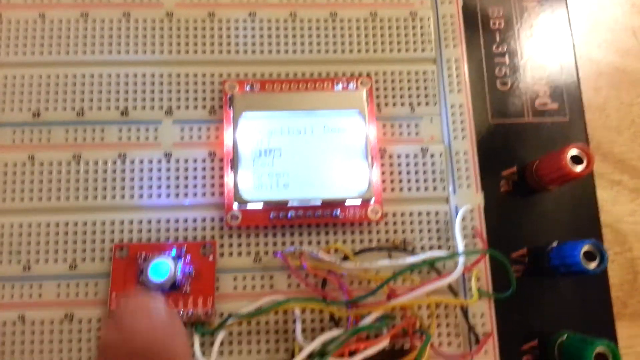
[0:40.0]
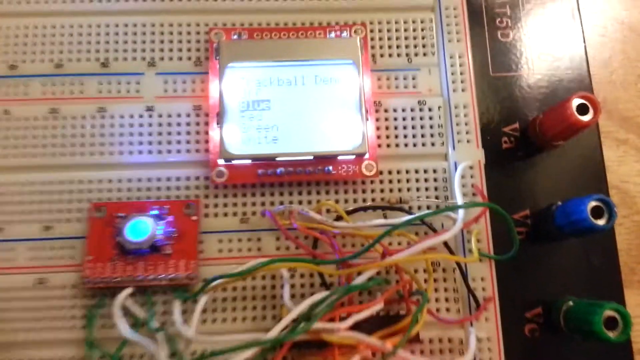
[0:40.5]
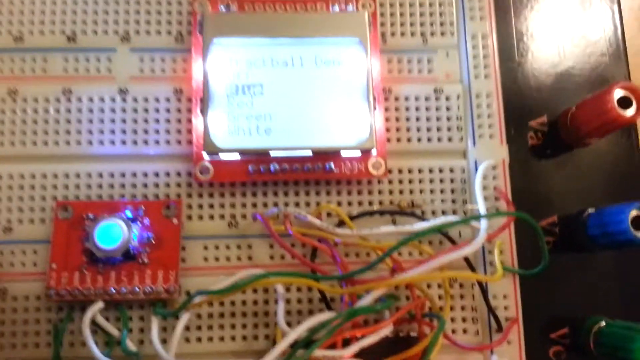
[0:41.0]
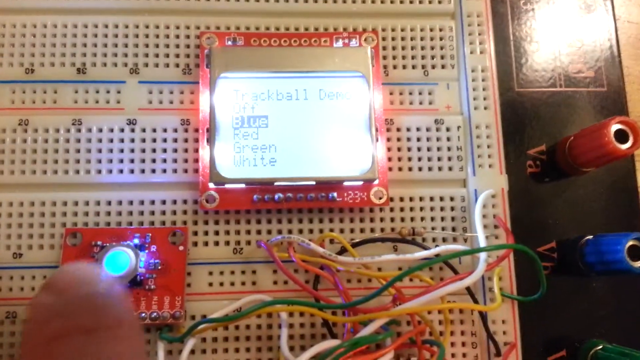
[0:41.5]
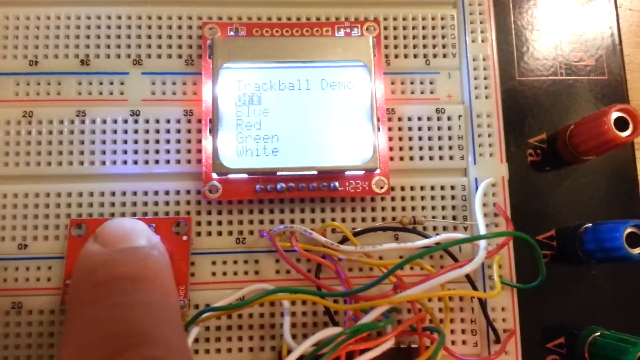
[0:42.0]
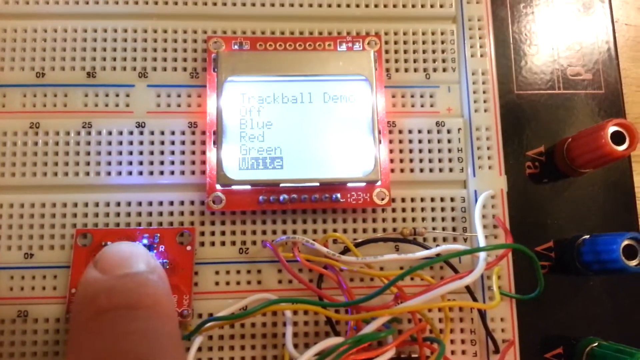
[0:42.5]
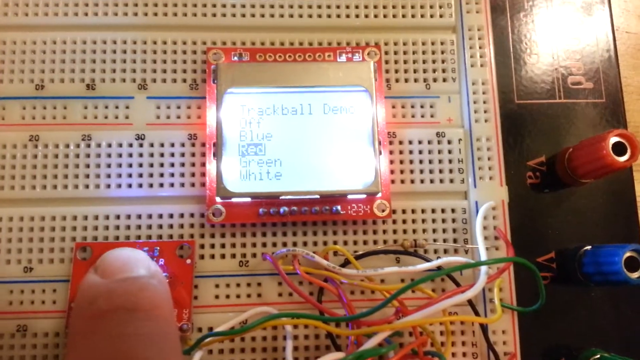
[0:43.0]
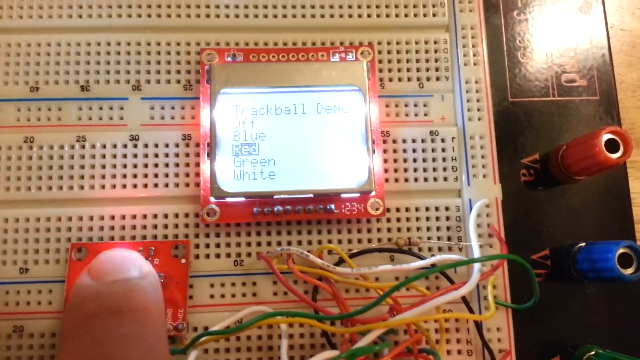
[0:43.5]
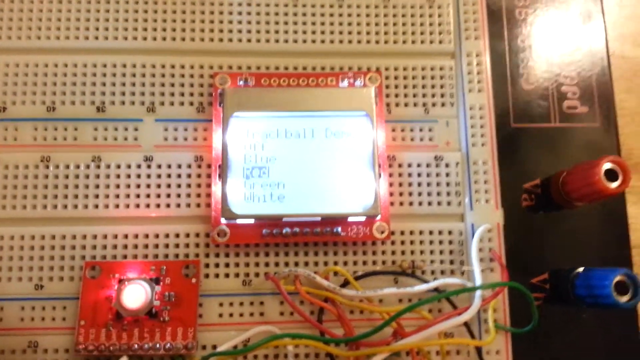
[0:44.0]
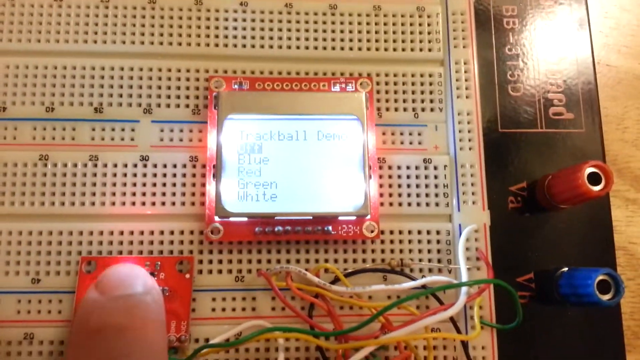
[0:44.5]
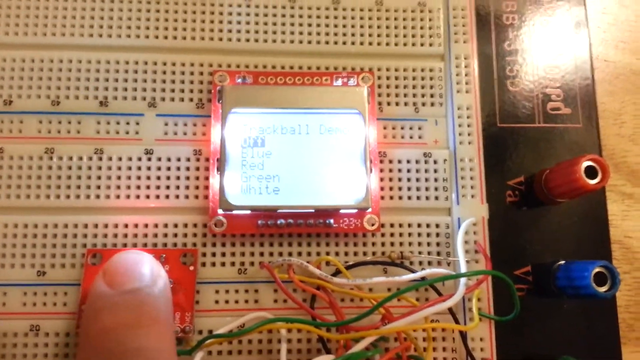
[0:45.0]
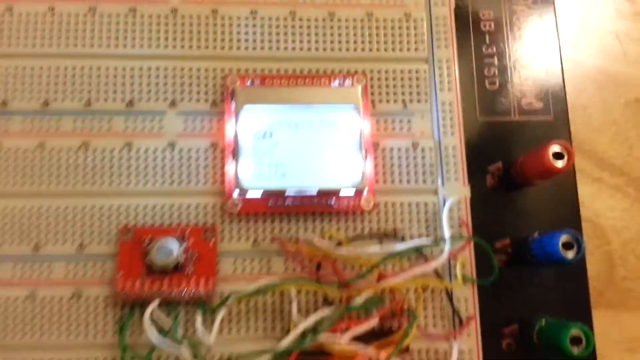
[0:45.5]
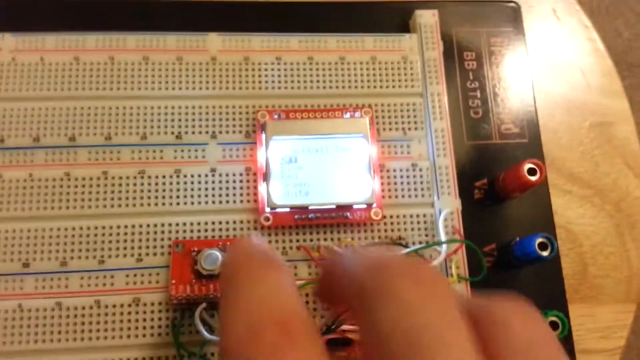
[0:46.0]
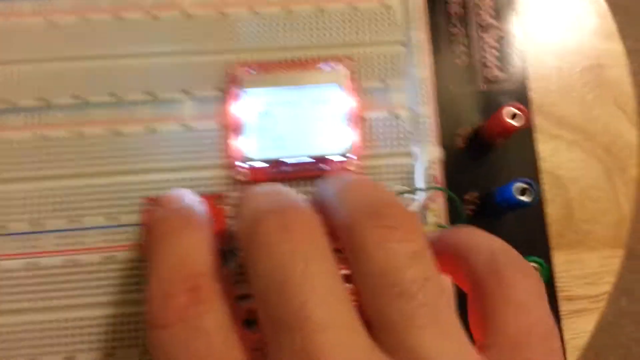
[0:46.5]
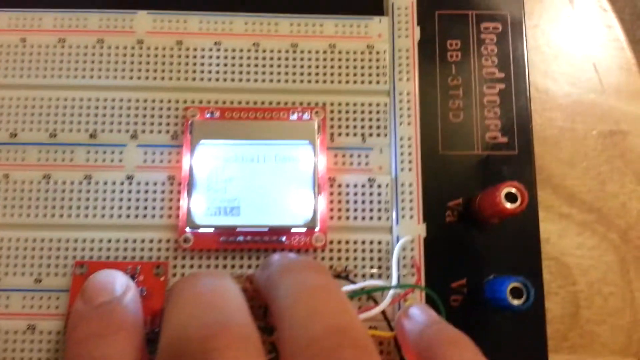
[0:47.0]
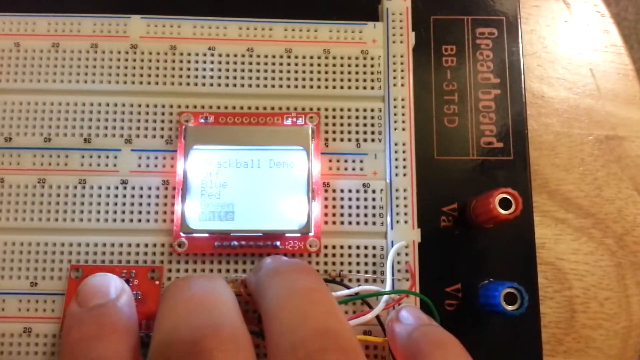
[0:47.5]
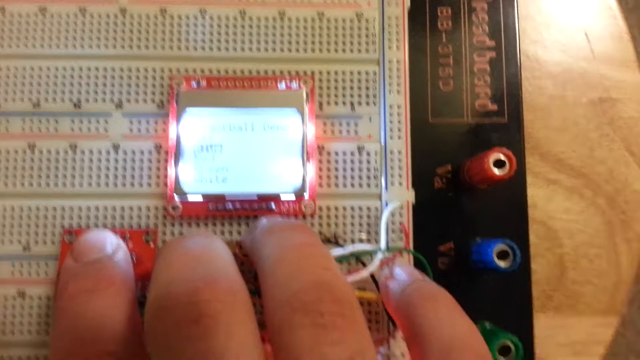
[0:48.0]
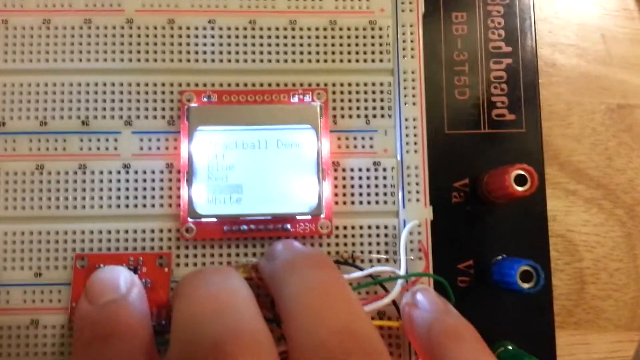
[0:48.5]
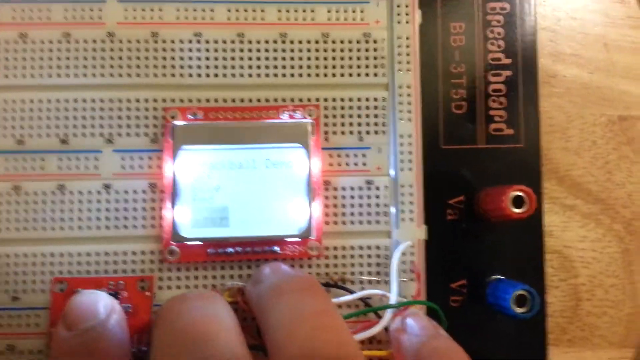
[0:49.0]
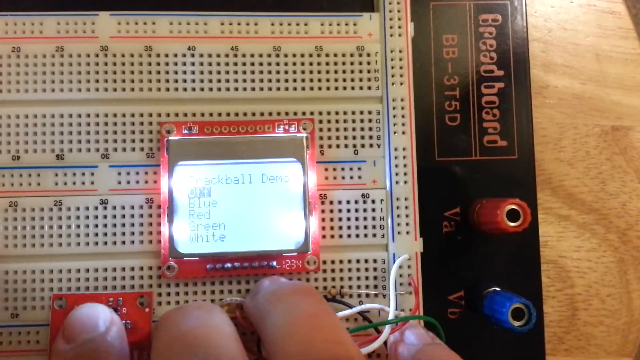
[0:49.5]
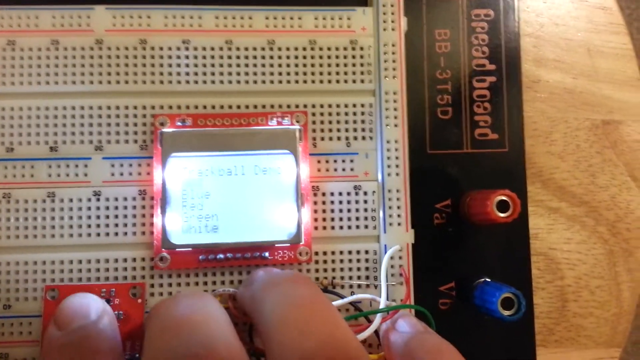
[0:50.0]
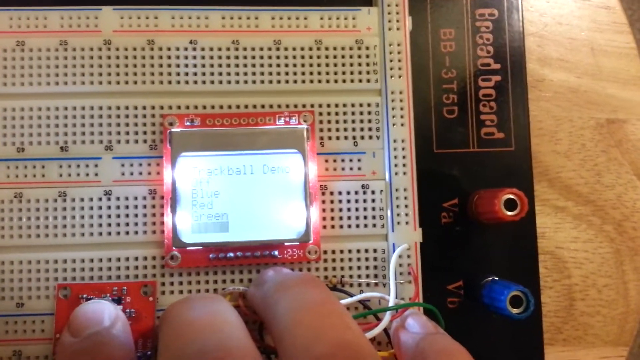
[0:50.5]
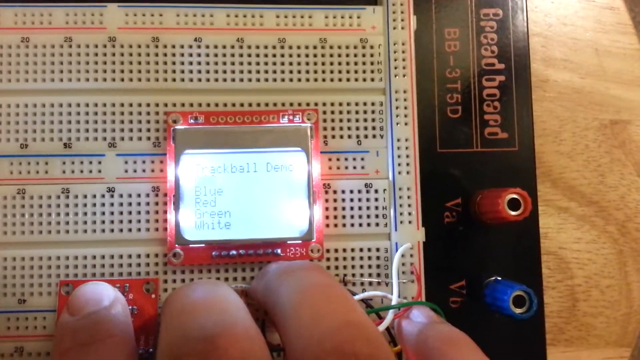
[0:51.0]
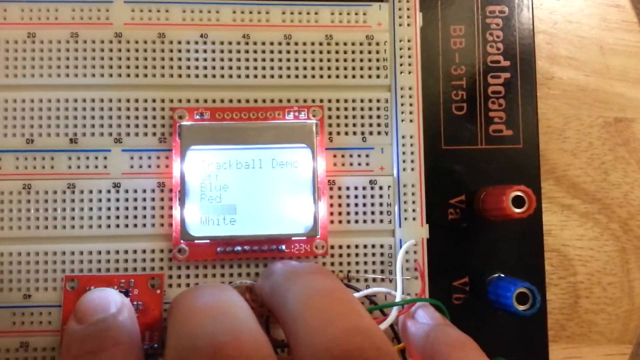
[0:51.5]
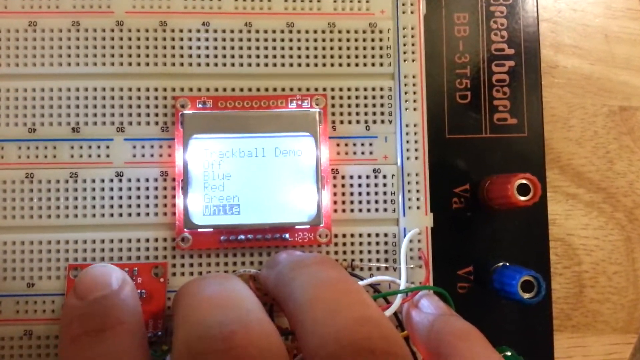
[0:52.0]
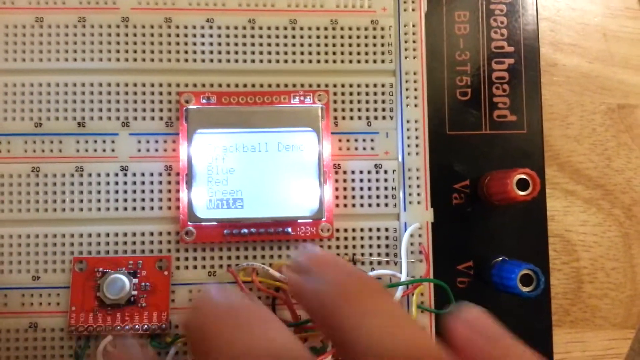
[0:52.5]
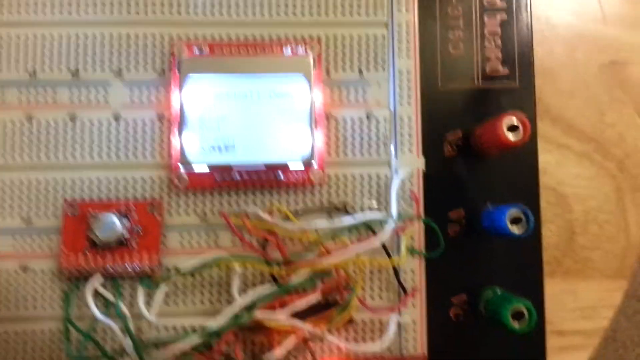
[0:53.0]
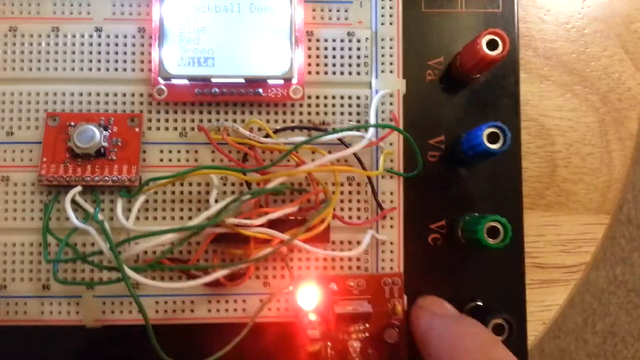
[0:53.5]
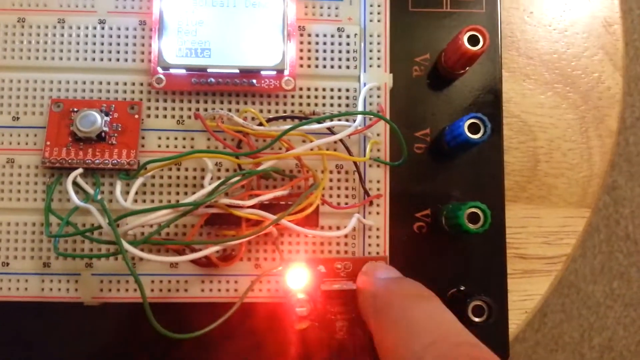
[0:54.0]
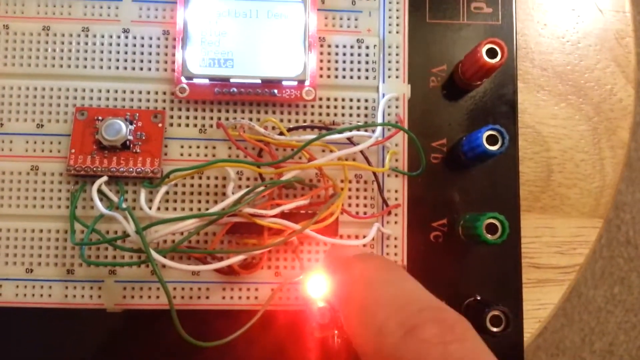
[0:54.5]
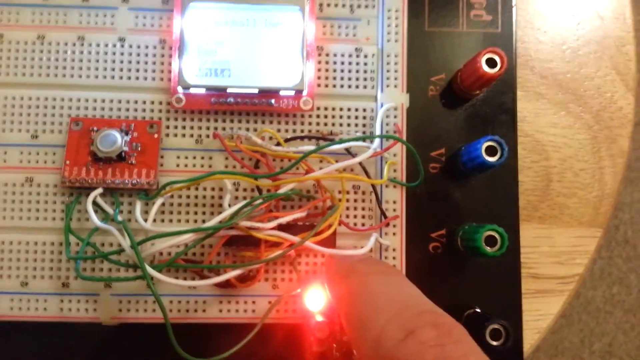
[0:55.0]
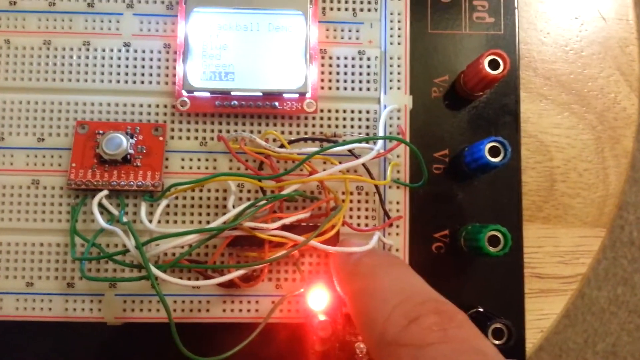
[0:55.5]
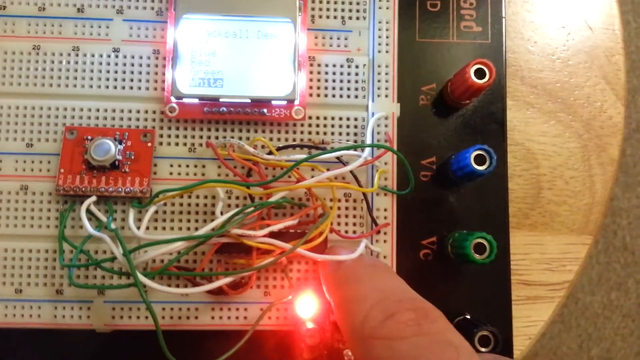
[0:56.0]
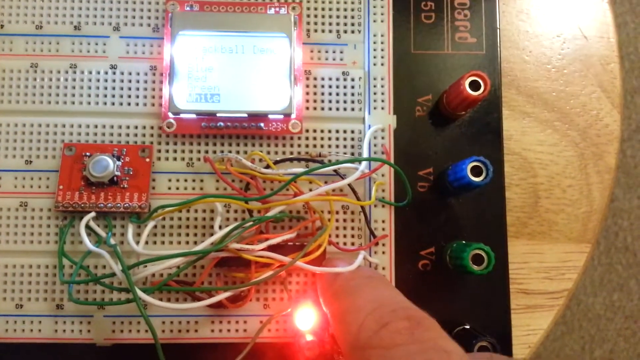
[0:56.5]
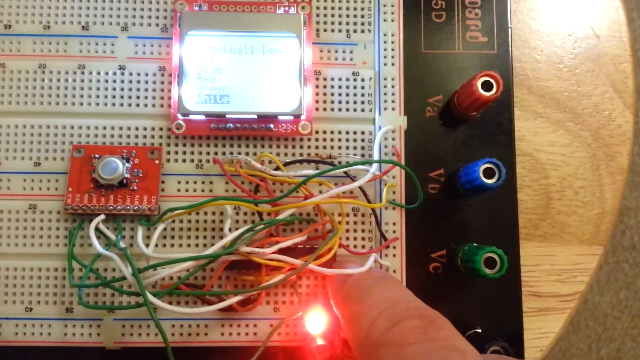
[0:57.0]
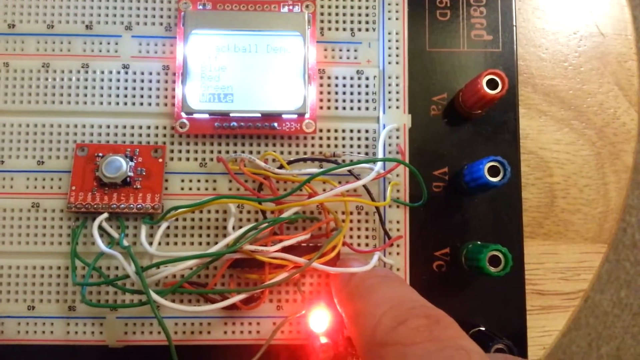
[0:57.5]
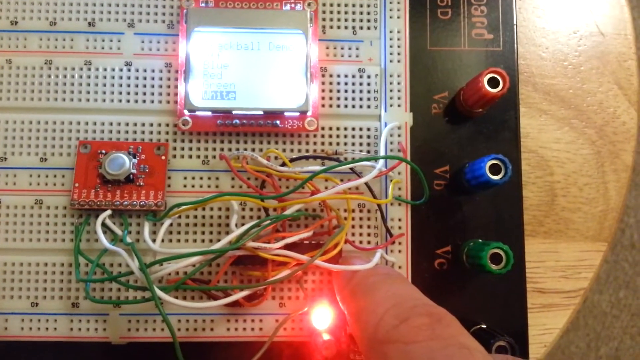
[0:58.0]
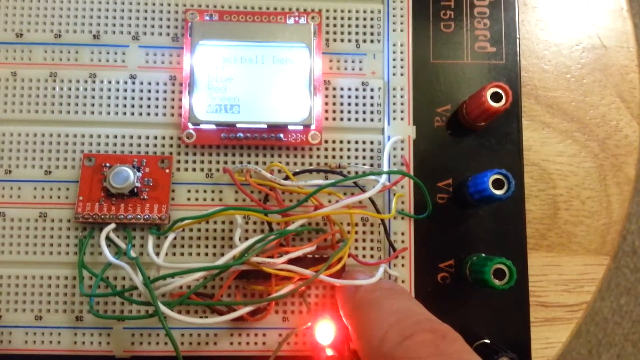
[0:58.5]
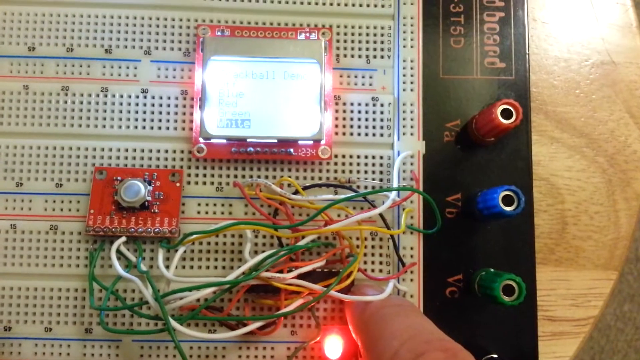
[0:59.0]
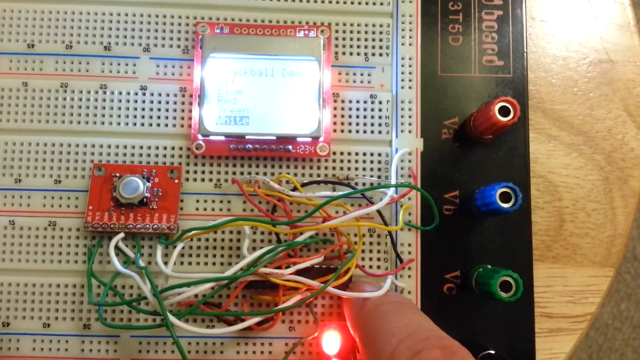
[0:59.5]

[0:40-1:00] The button keeps changing color whenever a different word is selected on the screen. The hand presses the button repeatedly, and four of its fingers are visible. It continues demonstrating many items on the motherboard, and as it presses, the selection goes to "off" or to other colors, with the button changing accordingly. A light is on at the bottom chip, which is red. There are many wires, green, yellow, white and red, and a black wire is also visible. Text reads "breadboard", and below it, in orange, "bb line three T five D". The board appears to be on top of a brown desk.